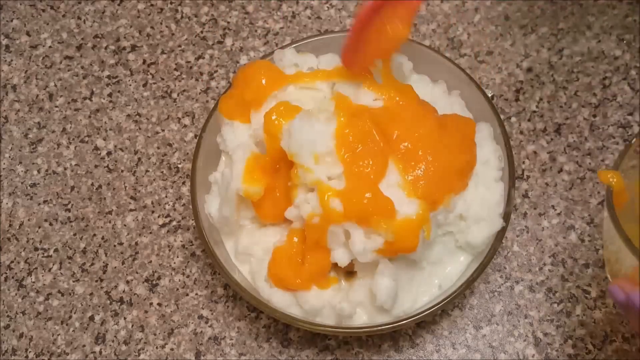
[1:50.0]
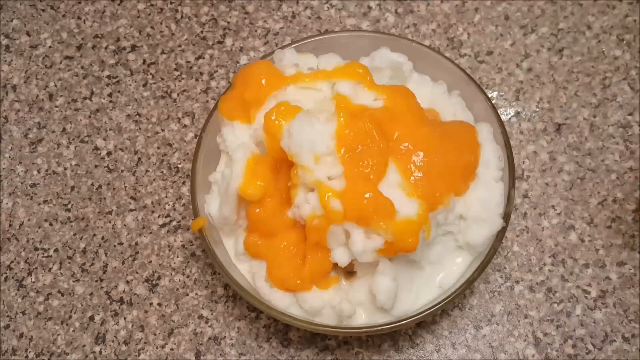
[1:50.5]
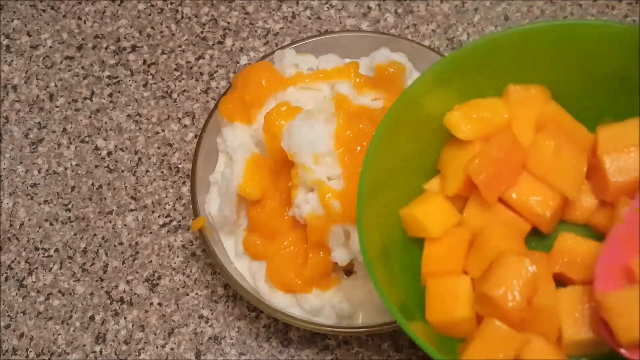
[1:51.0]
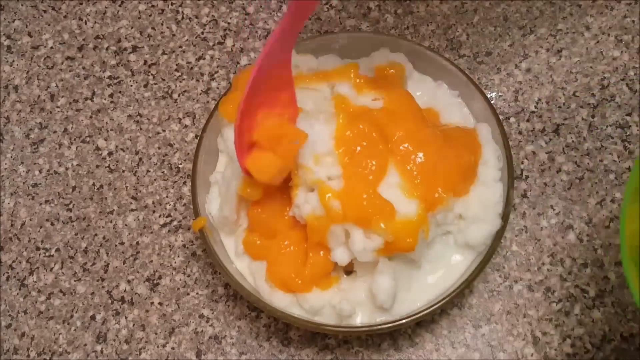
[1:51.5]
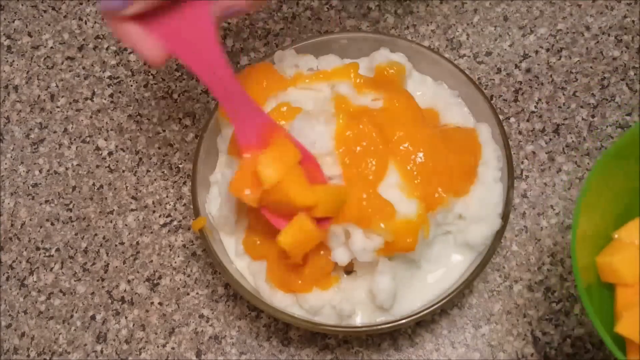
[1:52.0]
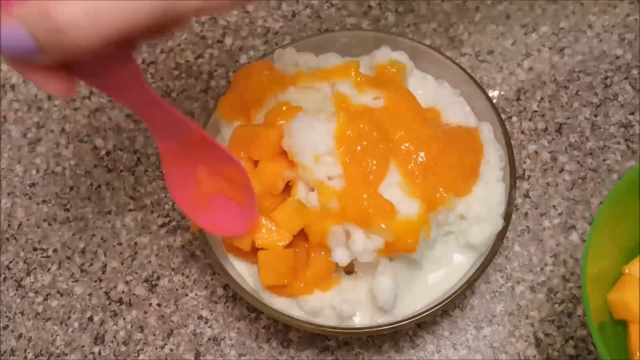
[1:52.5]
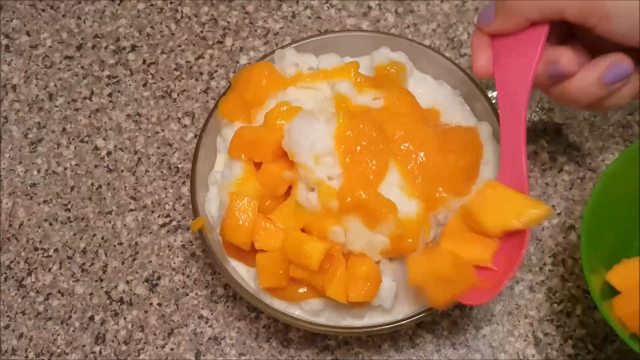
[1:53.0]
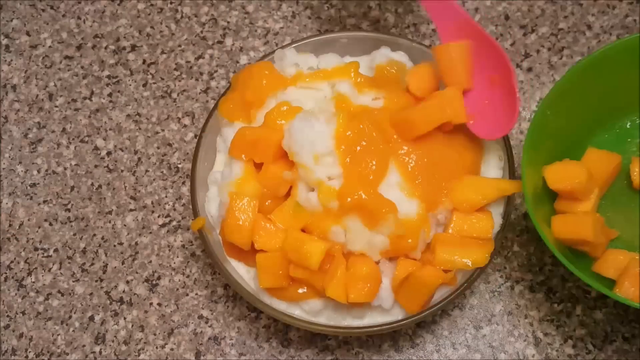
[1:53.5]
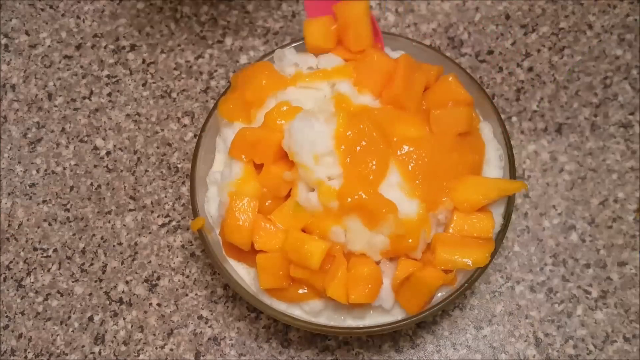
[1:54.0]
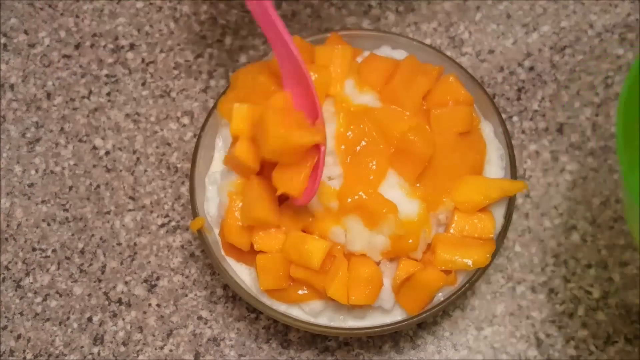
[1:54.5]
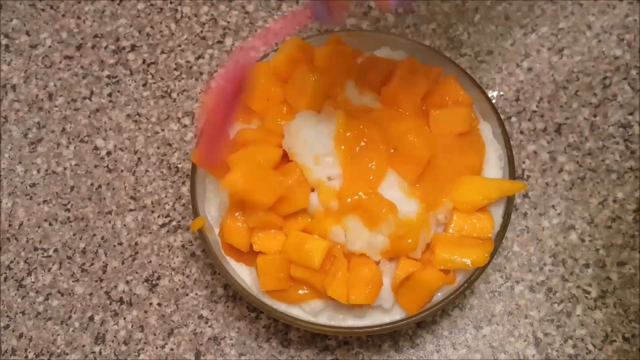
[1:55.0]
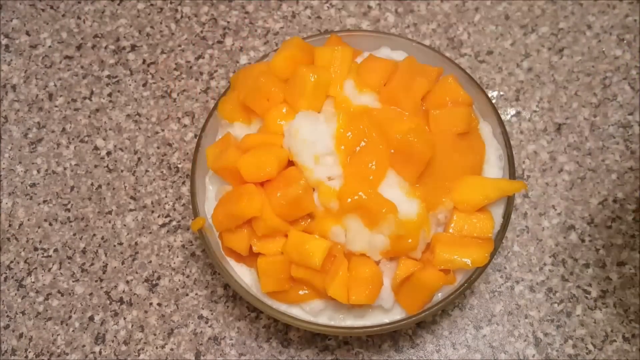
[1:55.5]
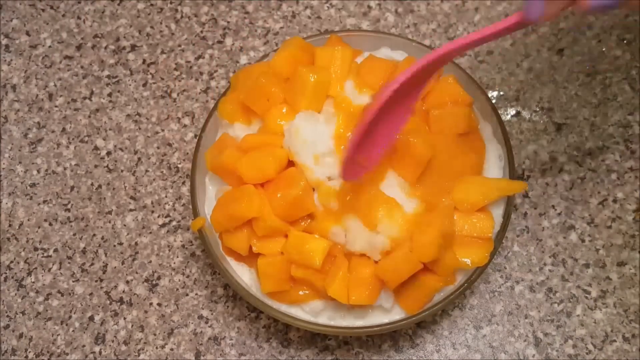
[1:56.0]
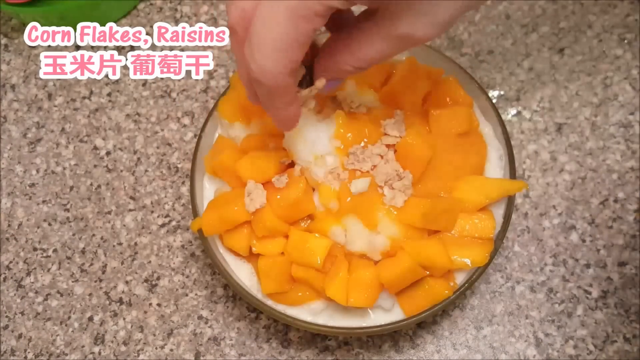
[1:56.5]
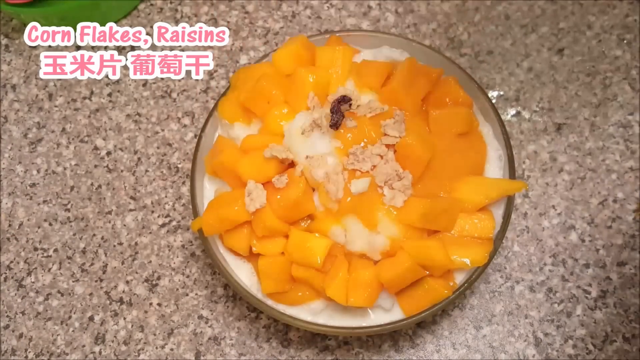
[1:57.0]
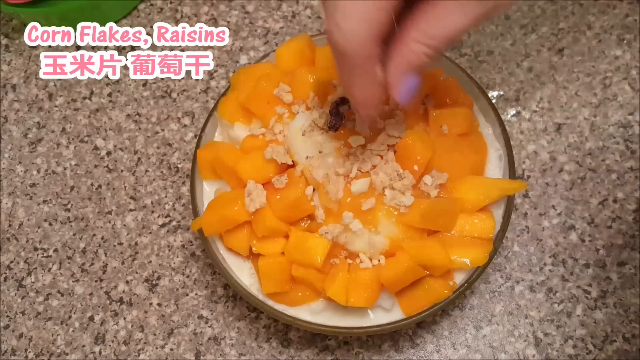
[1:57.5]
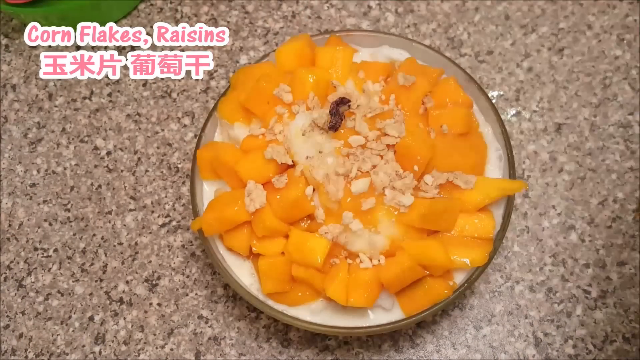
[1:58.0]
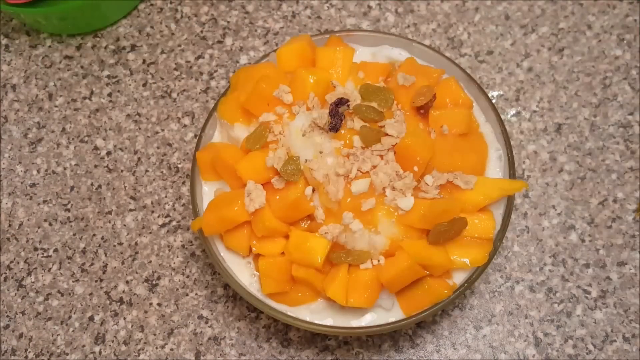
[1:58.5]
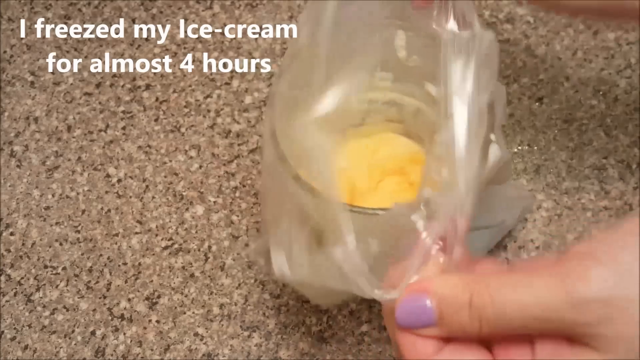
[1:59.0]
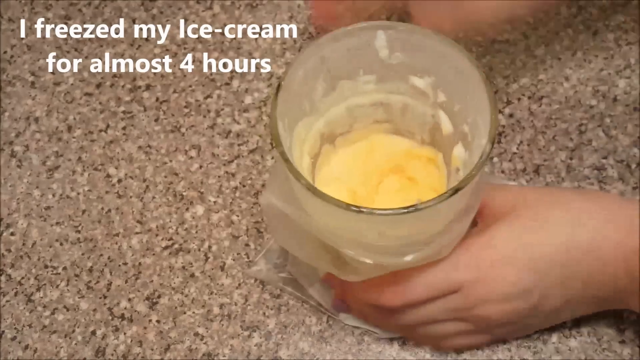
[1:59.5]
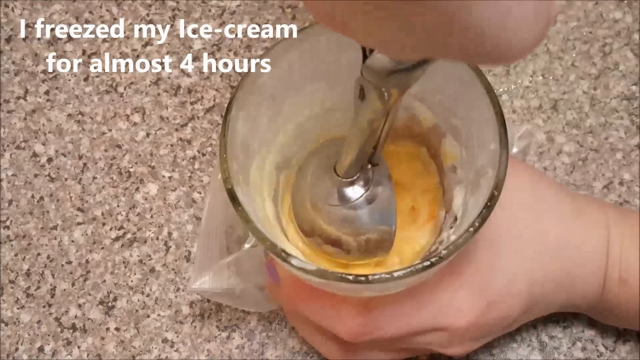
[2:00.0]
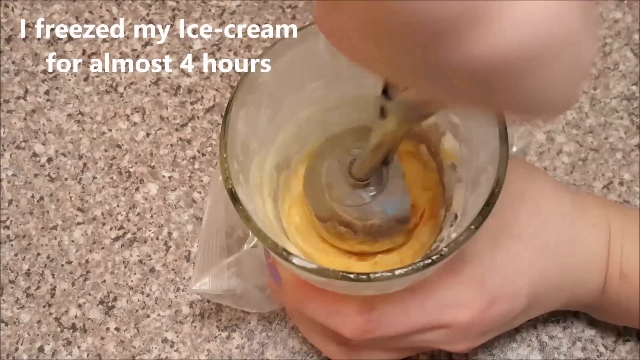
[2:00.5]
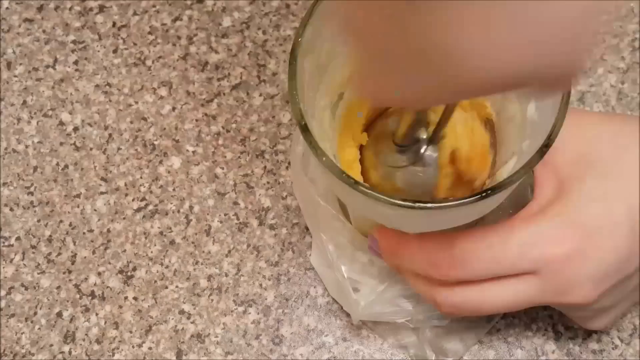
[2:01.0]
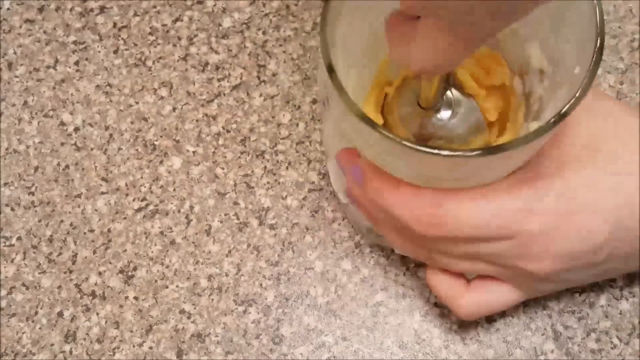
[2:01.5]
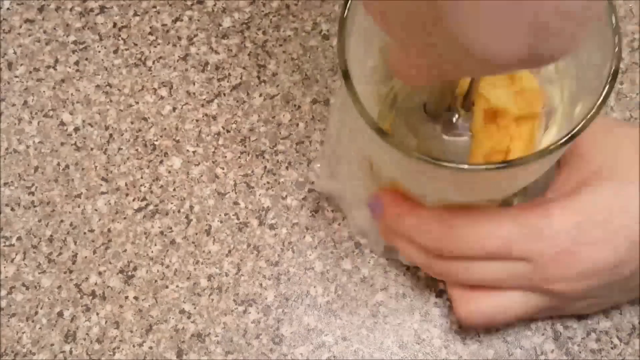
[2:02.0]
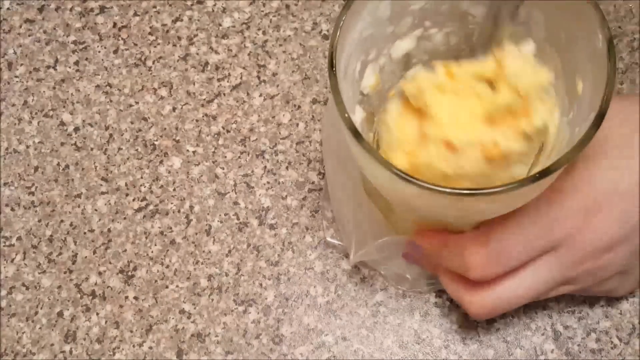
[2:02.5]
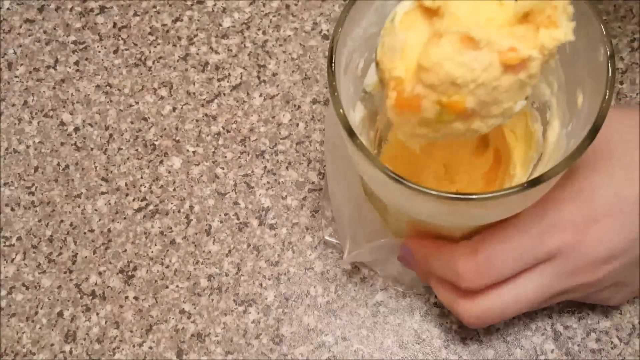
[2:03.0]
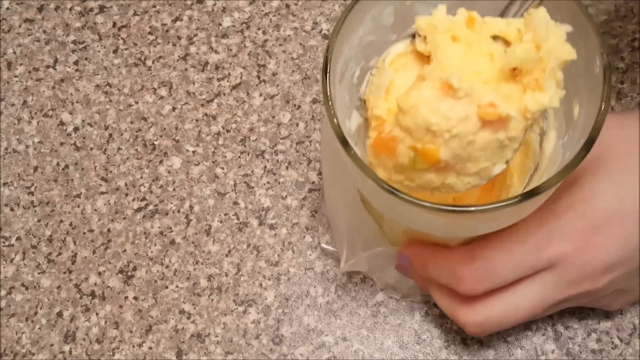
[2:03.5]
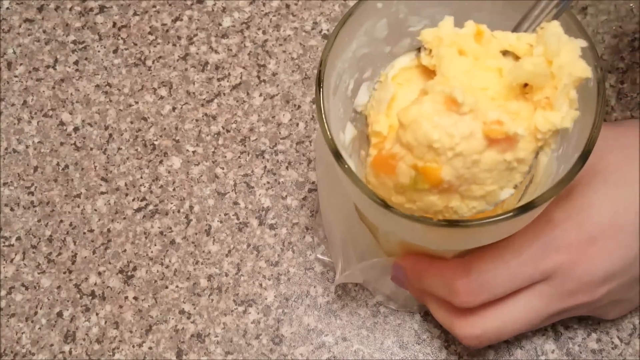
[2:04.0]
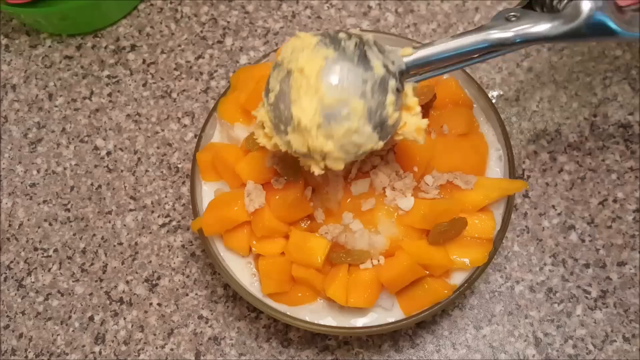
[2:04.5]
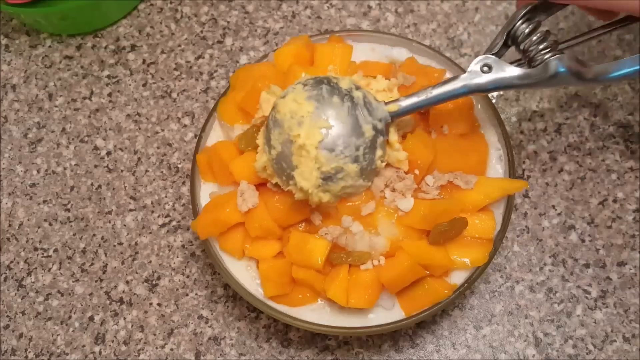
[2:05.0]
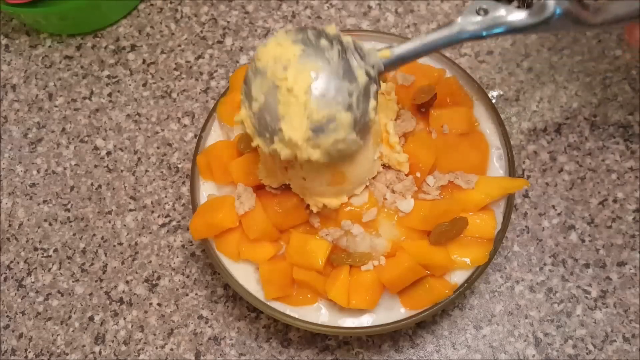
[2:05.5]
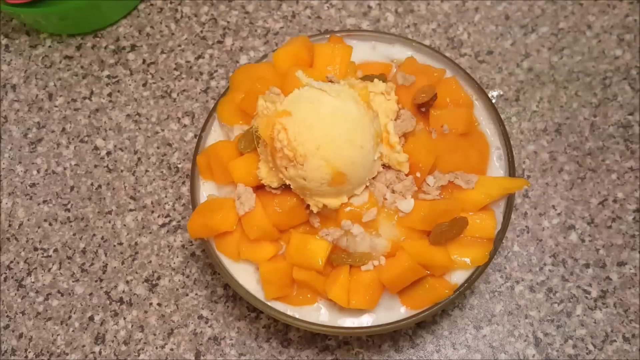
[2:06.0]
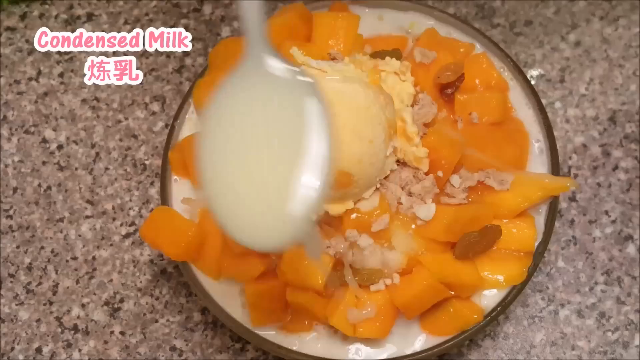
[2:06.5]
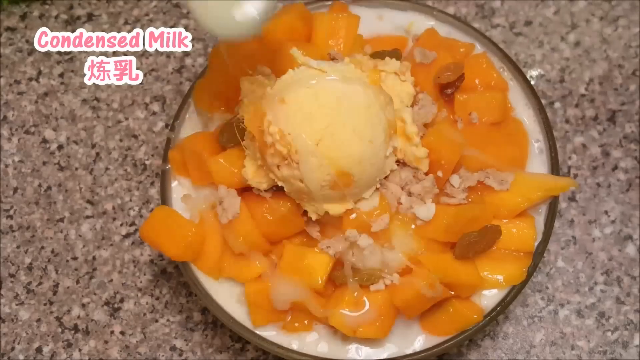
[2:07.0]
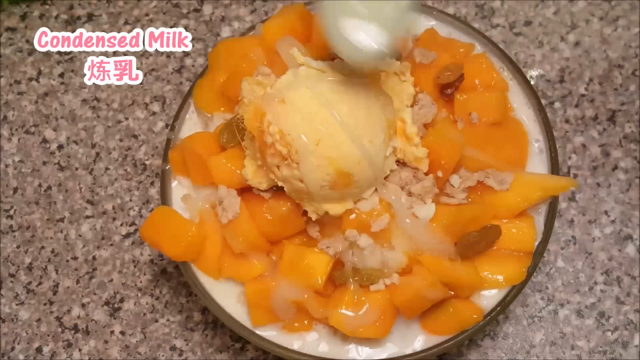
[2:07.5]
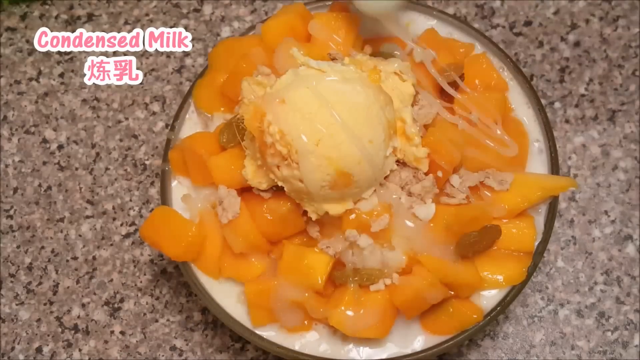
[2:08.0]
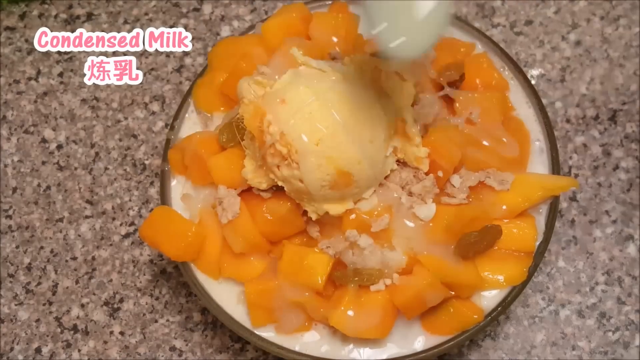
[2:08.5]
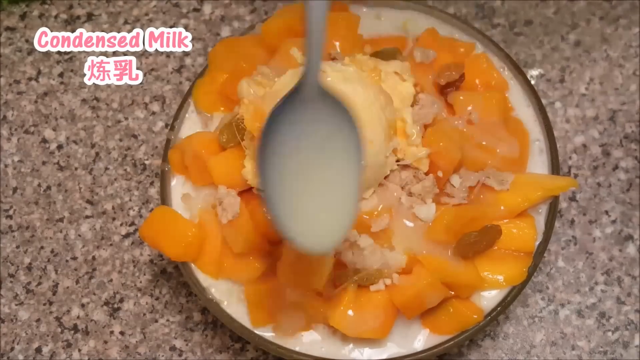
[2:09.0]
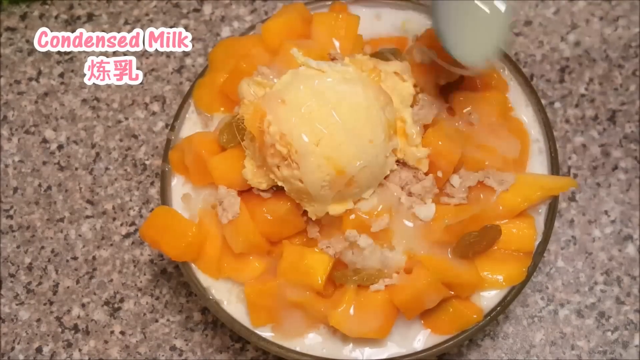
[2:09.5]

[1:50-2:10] Using a small pink spoon, the person adds mango cubes to the shaved ice. Cornflakes, raisins, and mango chunks are added on top of the shaved mango ice and puree, and a transition shows the ice cream being frozen for four hours. A scoop of the mango ice cream is added, and more condensed milk is drizzled on top of the dish. No people or animals appear.